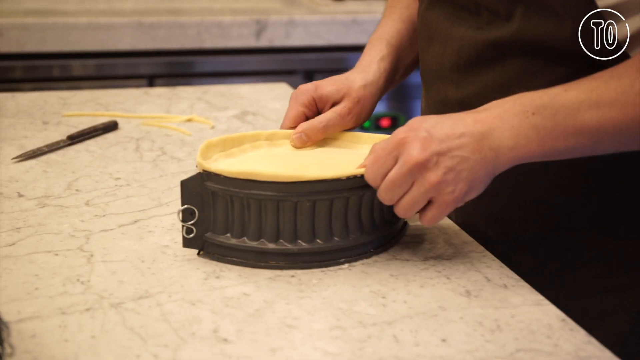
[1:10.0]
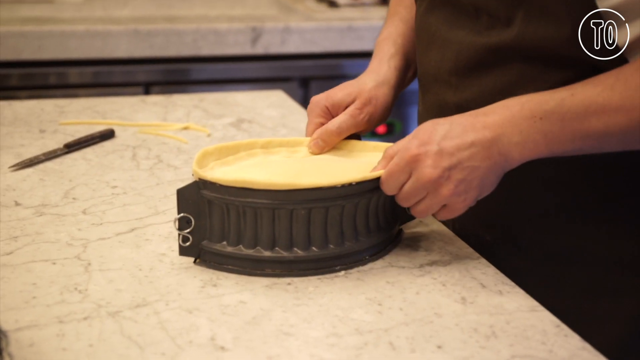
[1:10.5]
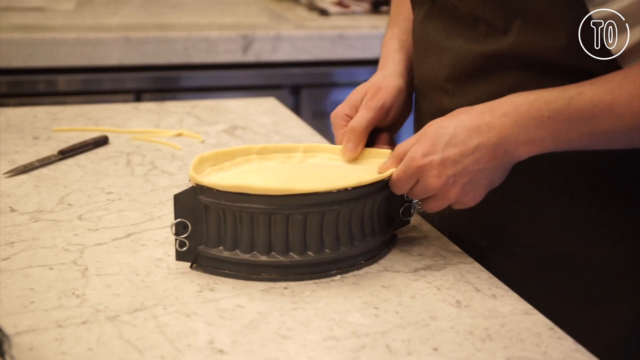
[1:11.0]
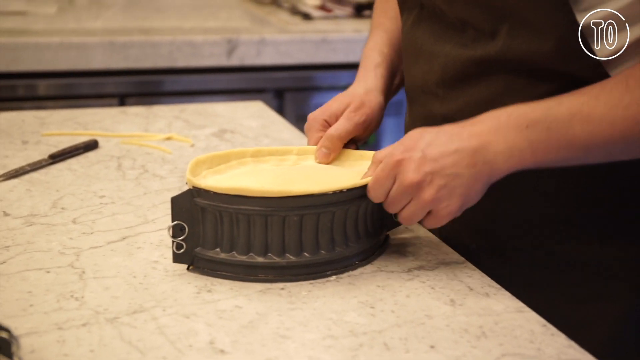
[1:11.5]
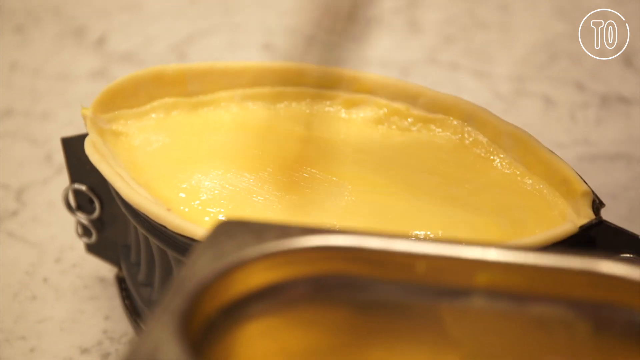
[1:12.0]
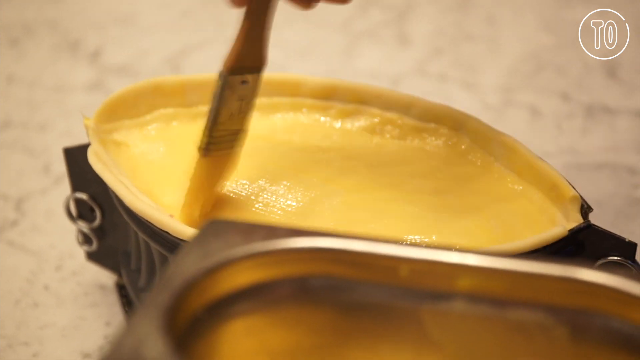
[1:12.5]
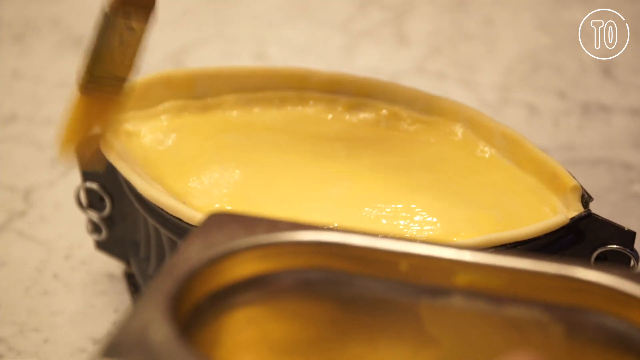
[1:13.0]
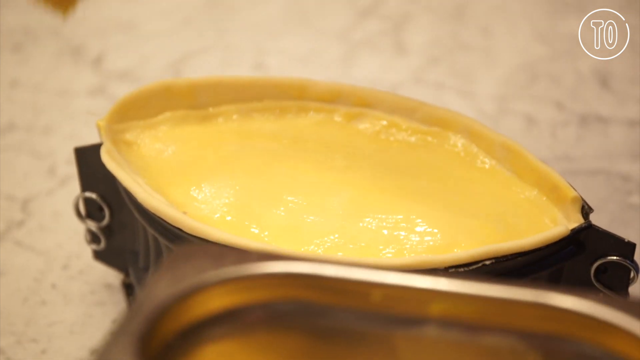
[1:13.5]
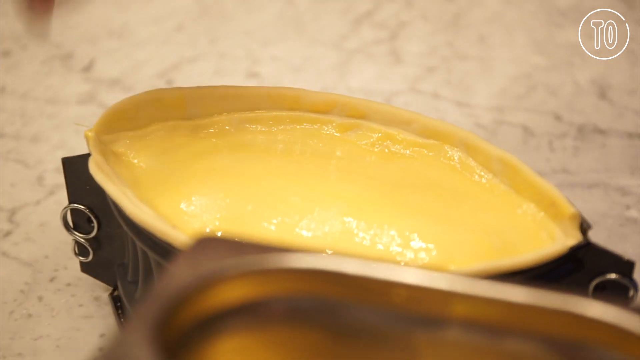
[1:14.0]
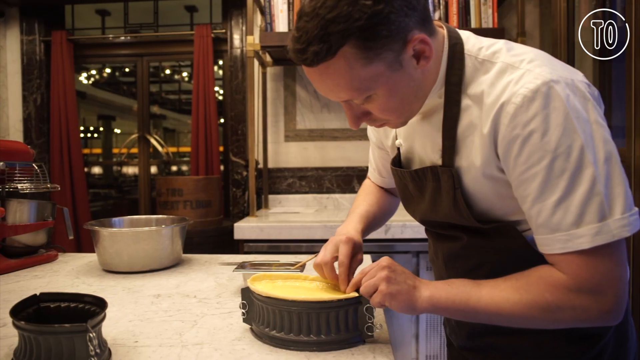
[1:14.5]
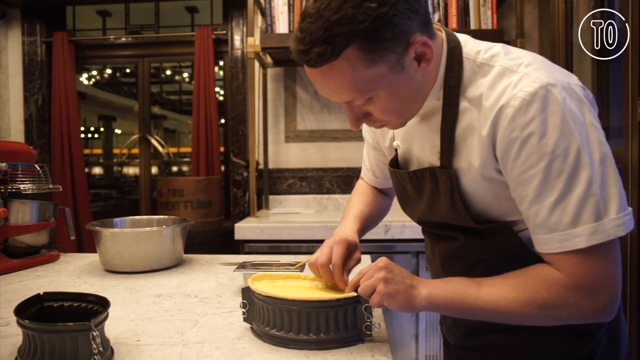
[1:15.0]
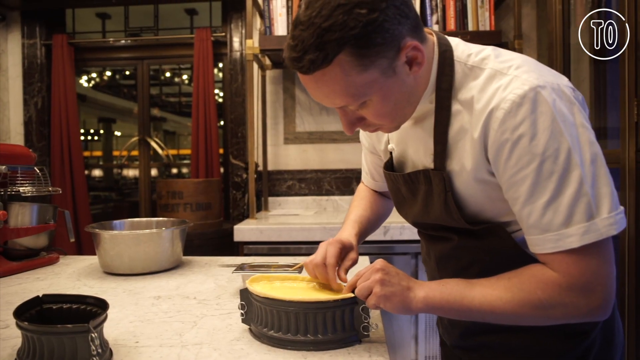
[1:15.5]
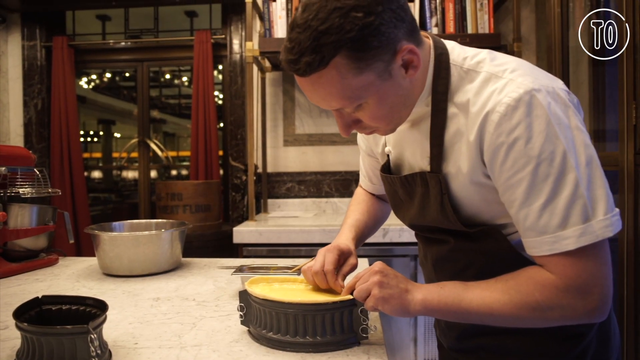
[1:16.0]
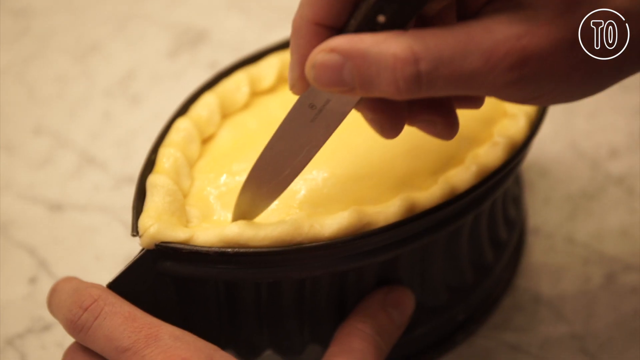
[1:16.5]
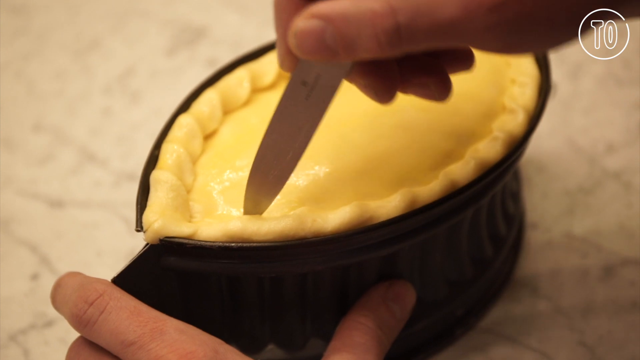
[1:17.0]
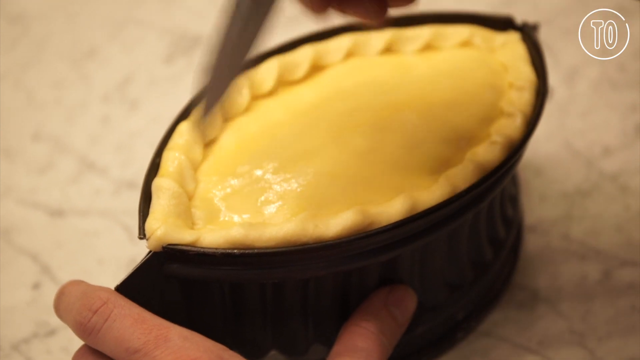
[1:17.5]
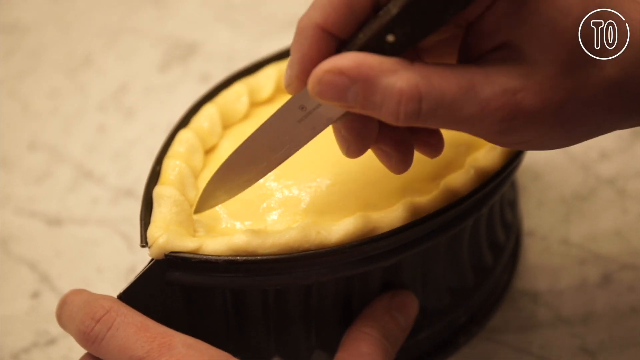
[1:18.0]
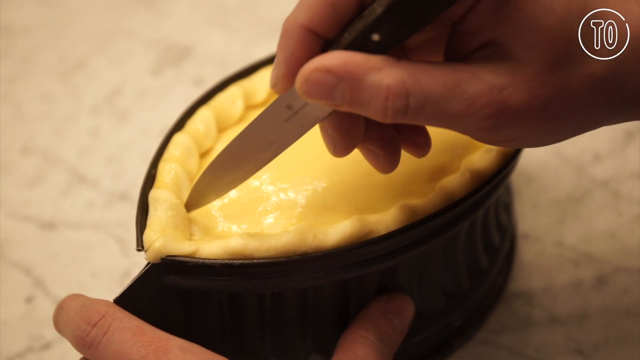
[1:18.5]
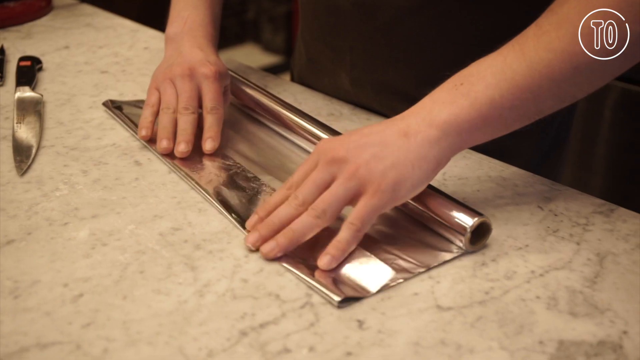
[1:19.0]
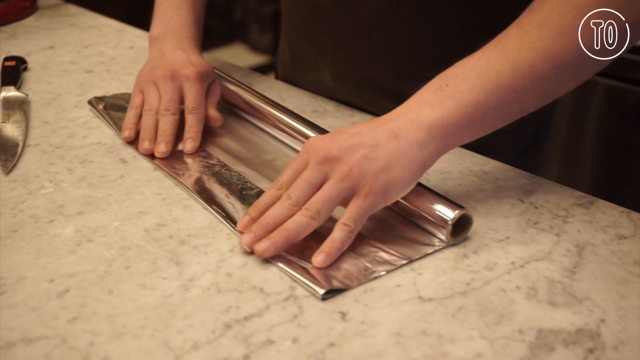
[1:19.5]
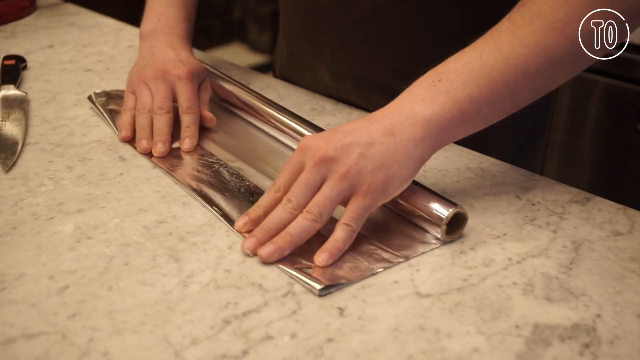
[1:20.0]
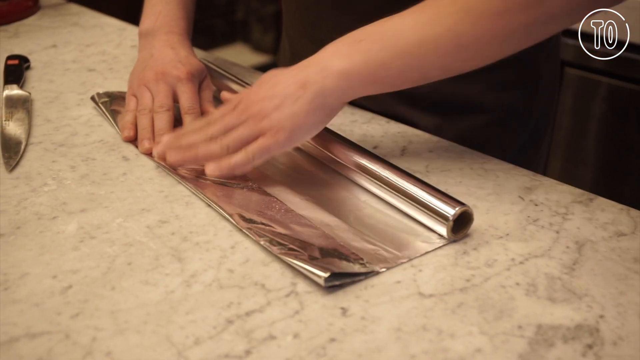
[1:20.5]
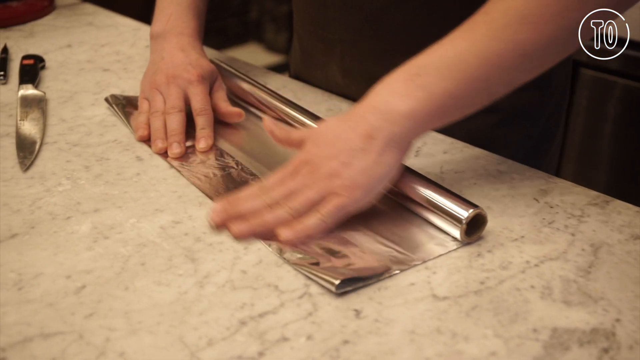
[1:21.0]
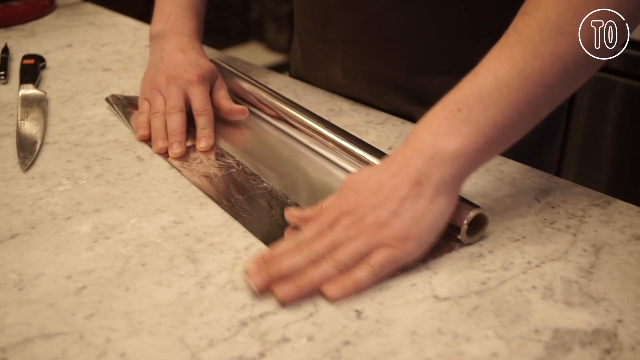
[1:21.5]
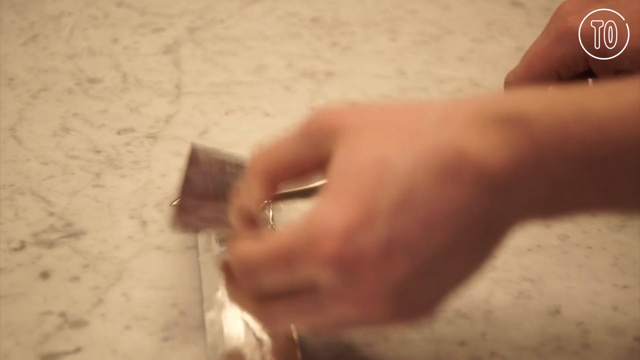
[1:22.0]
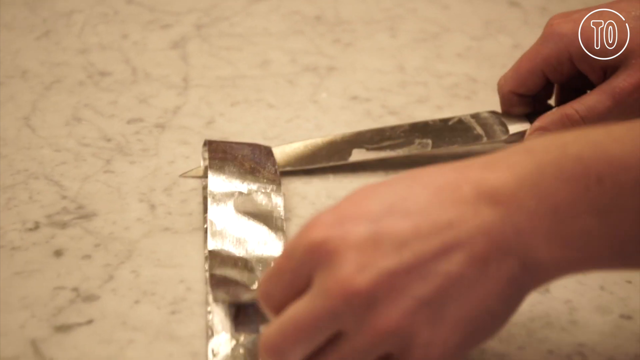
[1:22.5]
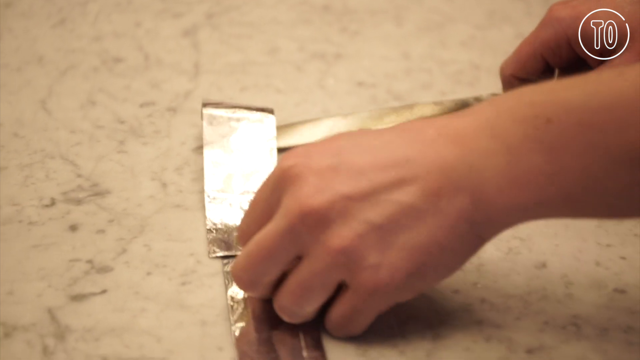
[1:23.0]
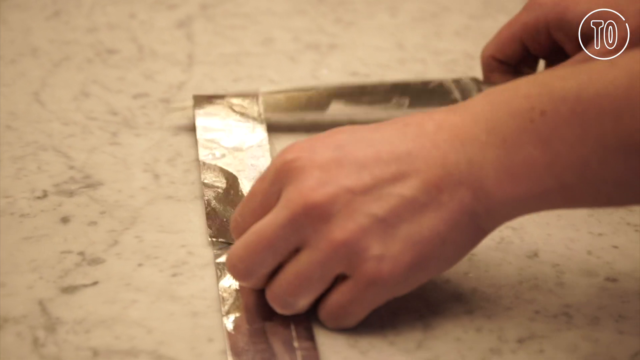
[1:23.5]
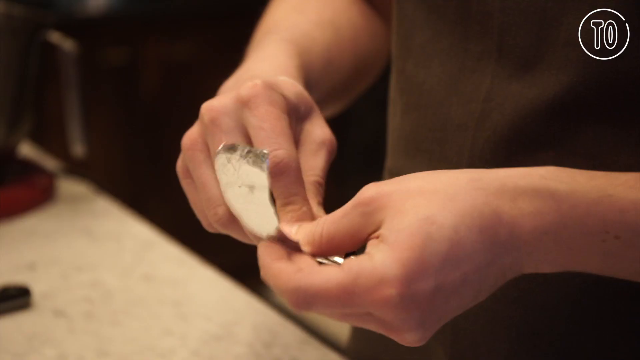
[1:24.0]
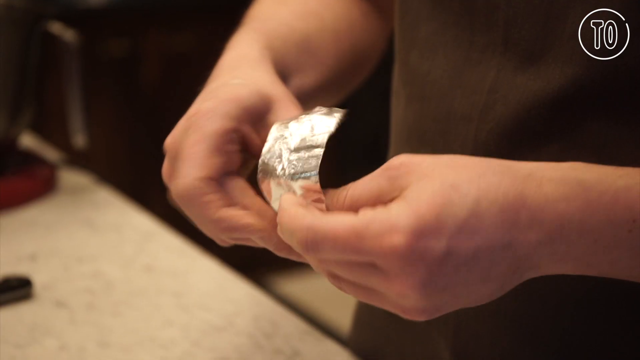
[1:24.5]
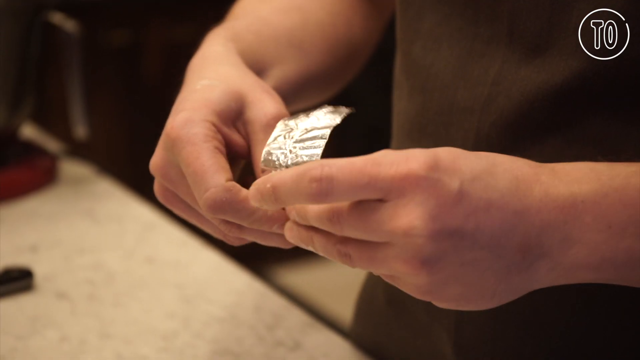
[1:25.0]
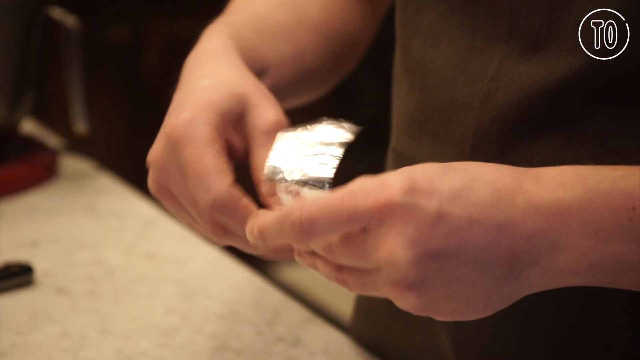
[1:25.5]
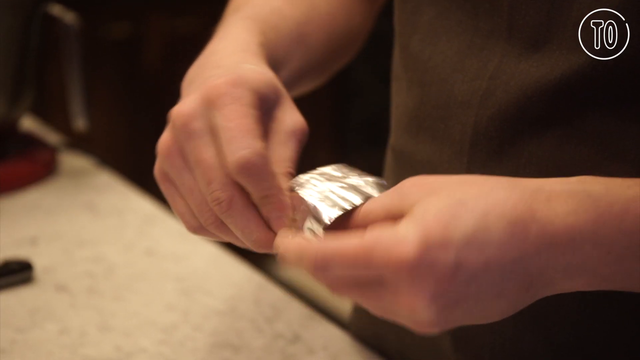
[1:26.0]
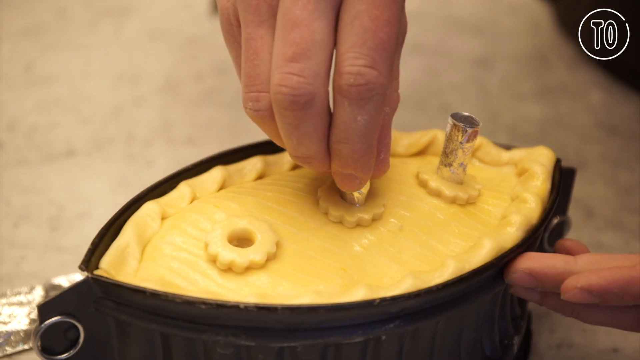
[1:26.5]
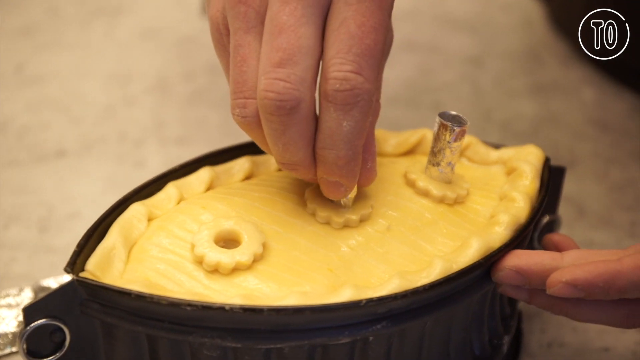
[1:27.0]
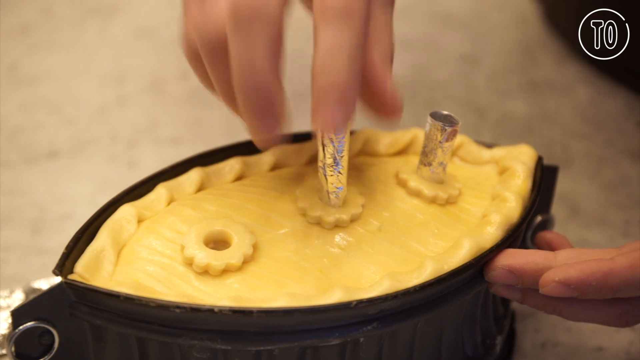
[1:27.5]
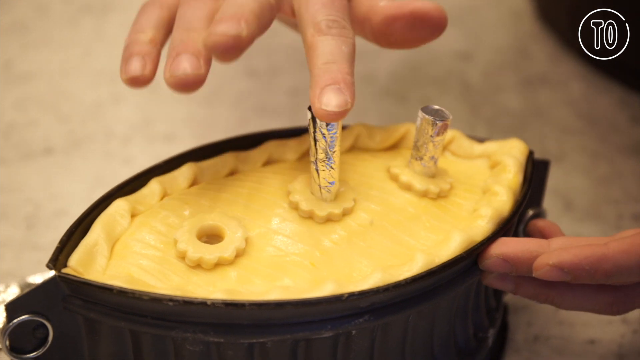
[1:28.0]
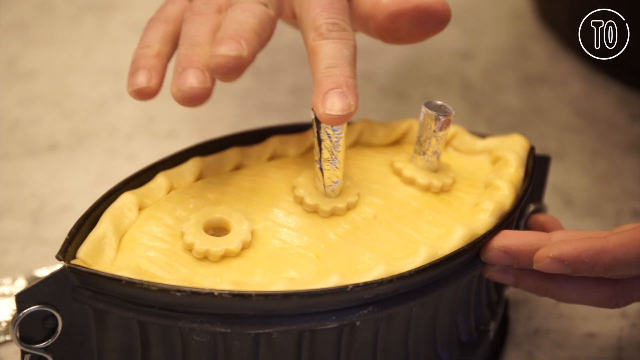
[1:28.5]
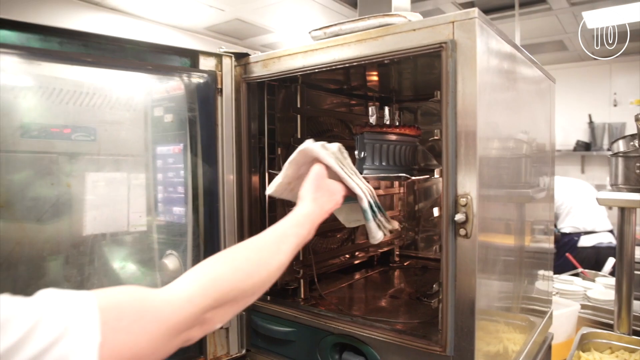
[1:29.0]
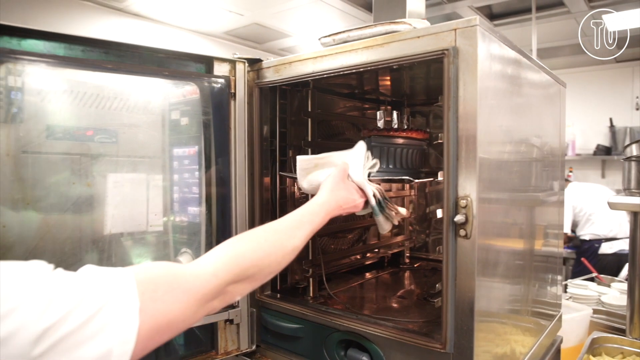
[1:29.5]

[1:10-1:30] A pair of hands works over a metal cast laying on the counter. The hands place a flap of dough on the cast and form it into place, pressing on the edges to seal it. In the next scene, a brush is used to brush butter onto the flap that was just placed on the cast. Next, the worker pinches the edges of the dough and the cast, making a decorative ridge around the edges. Then he uses a small knife to trace around and make designs in the outer edges of the dough, very gently and with attention to detail.